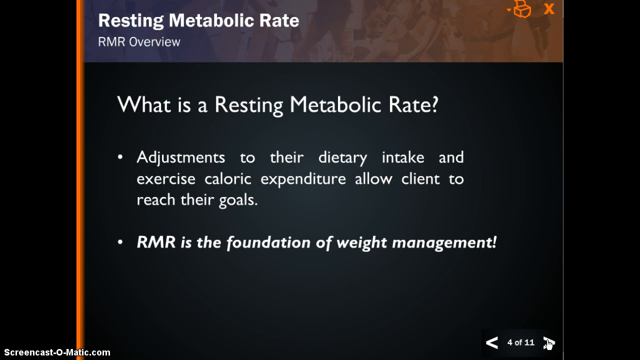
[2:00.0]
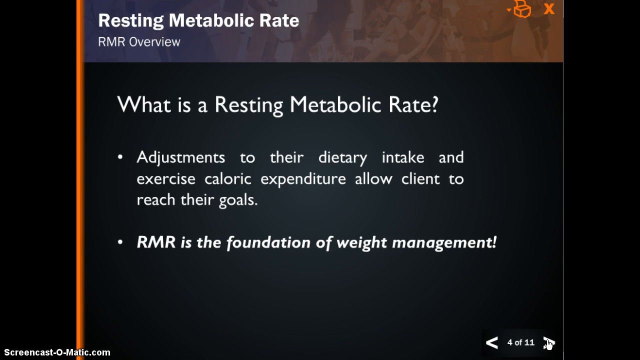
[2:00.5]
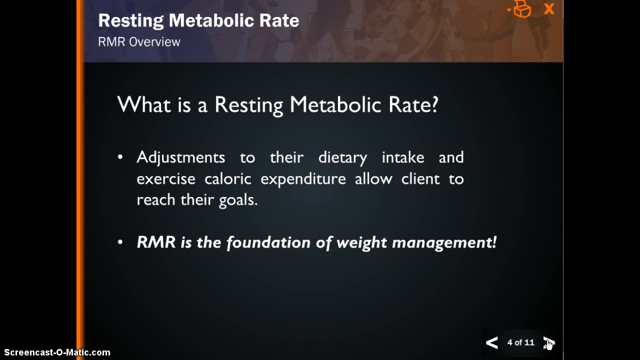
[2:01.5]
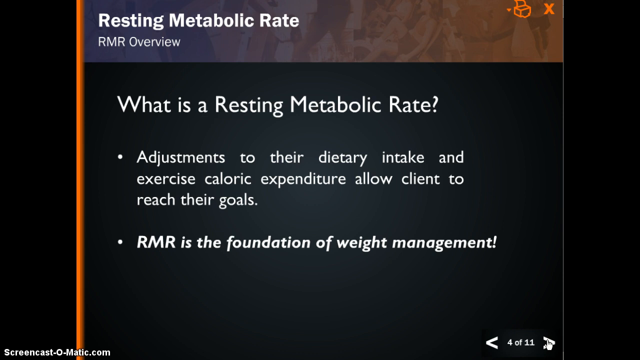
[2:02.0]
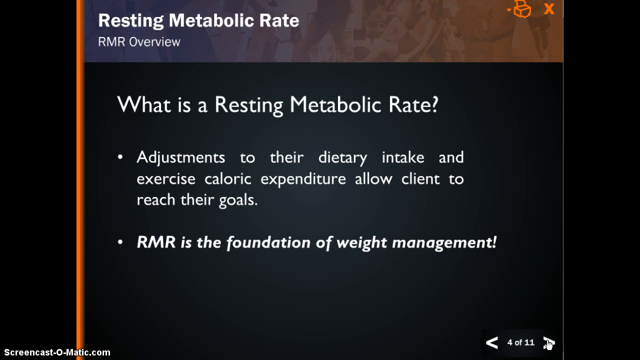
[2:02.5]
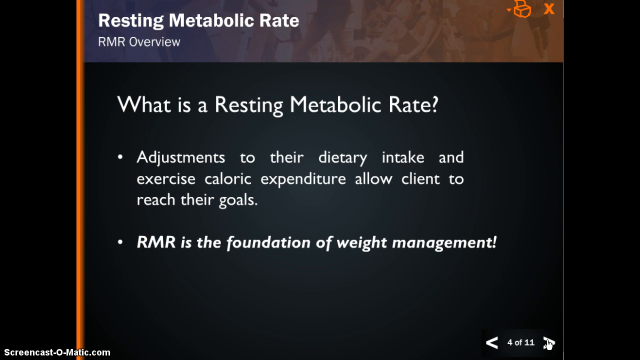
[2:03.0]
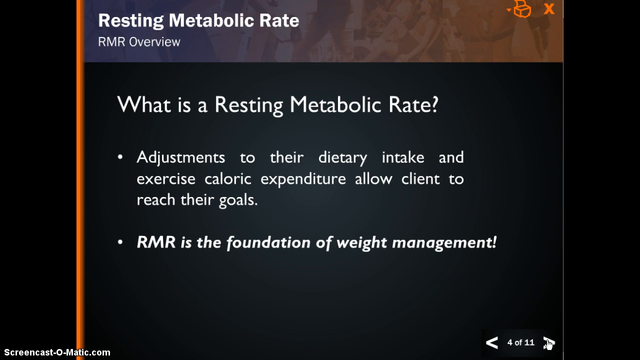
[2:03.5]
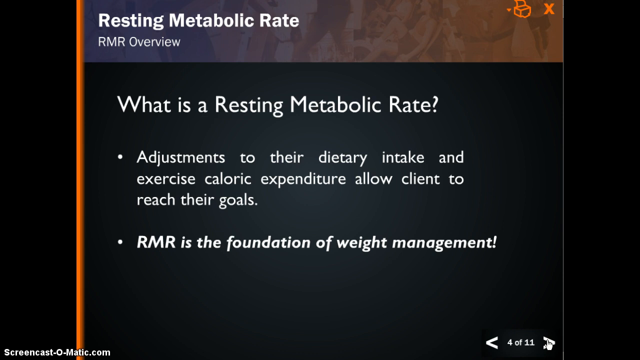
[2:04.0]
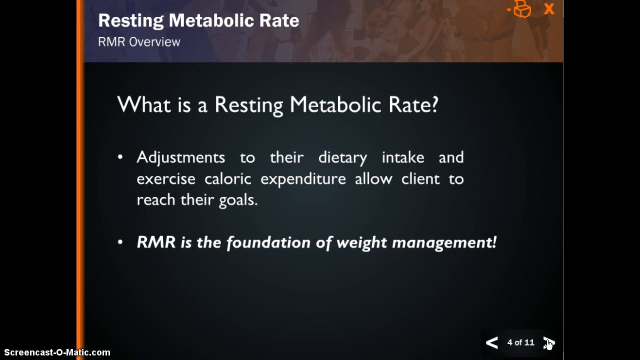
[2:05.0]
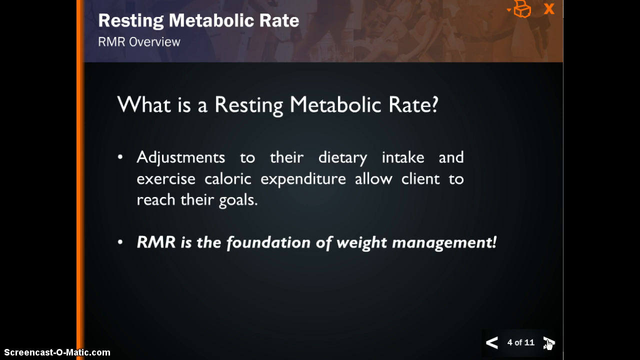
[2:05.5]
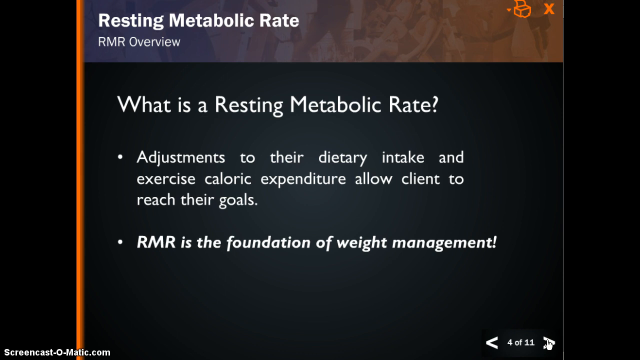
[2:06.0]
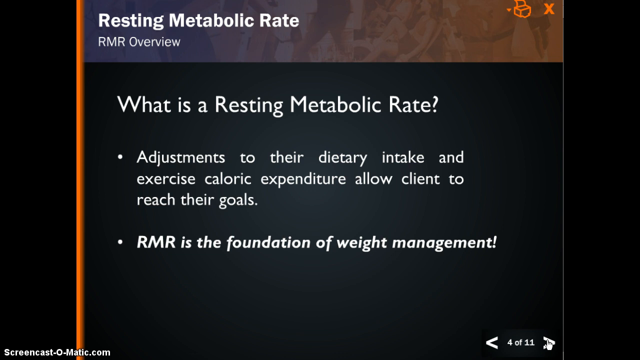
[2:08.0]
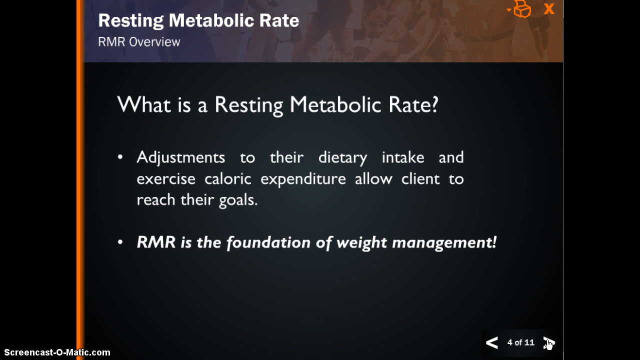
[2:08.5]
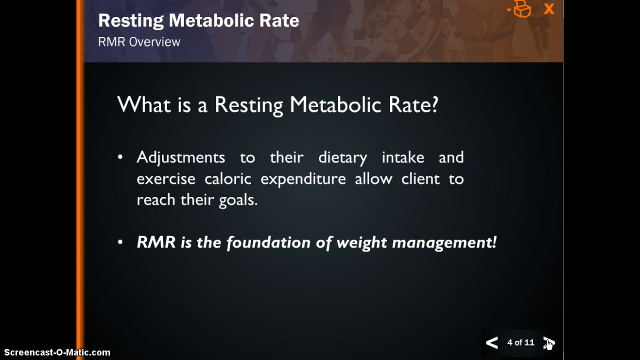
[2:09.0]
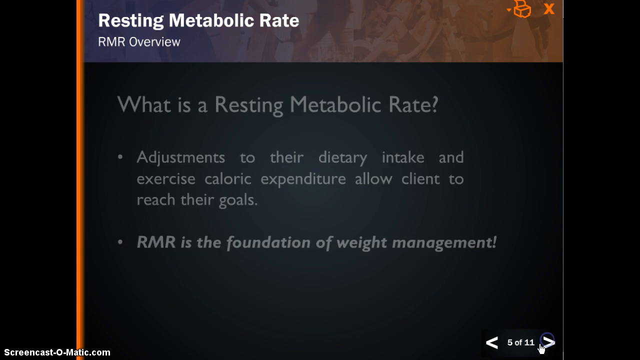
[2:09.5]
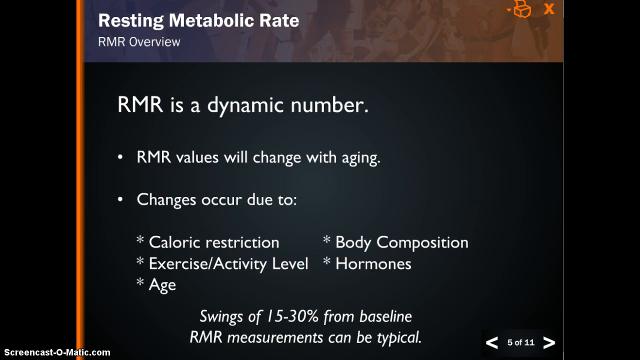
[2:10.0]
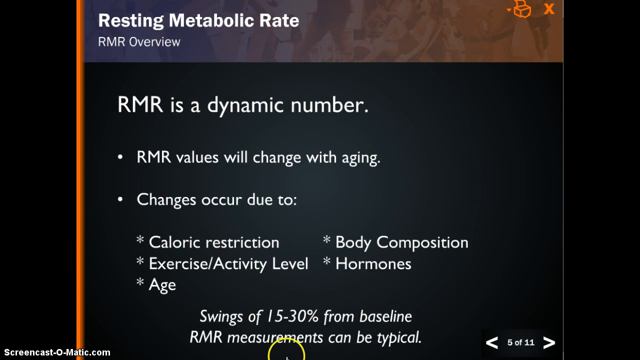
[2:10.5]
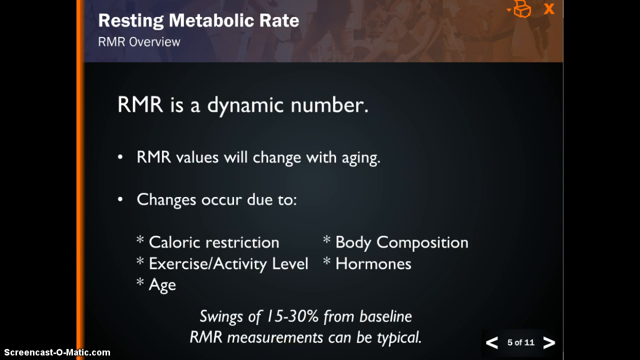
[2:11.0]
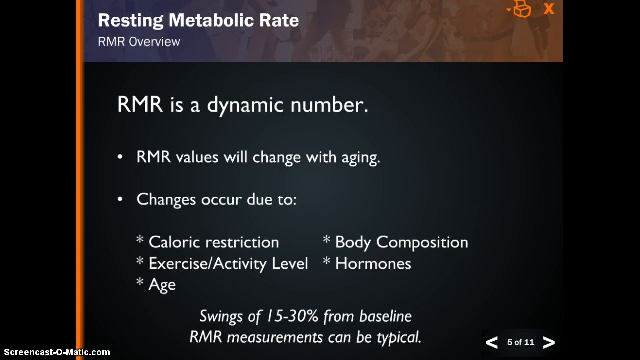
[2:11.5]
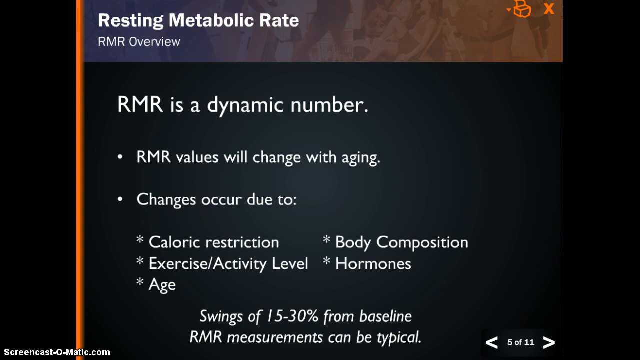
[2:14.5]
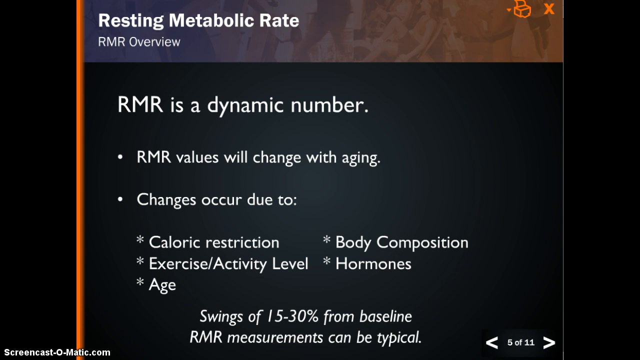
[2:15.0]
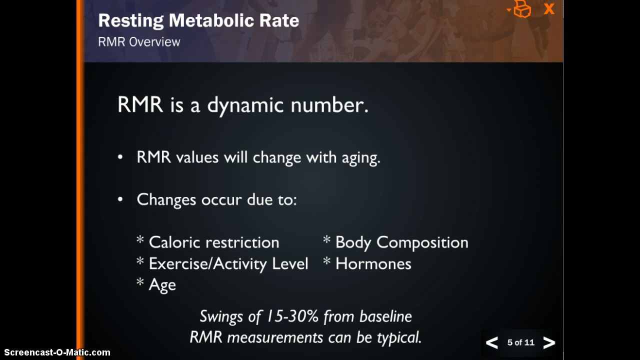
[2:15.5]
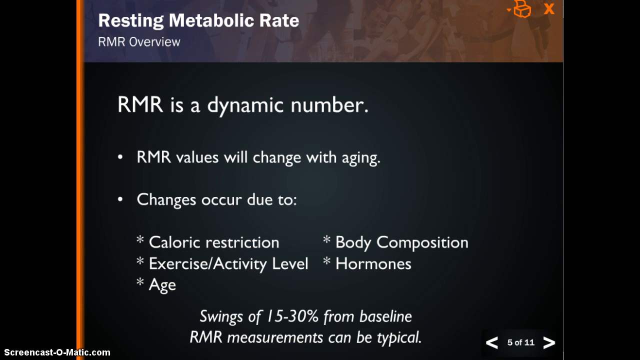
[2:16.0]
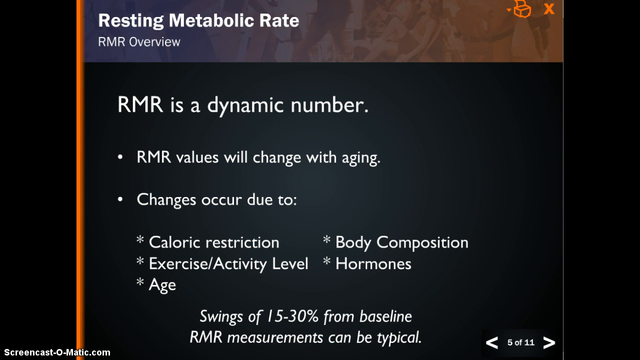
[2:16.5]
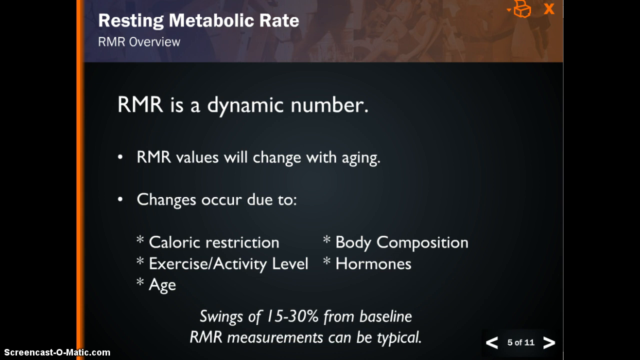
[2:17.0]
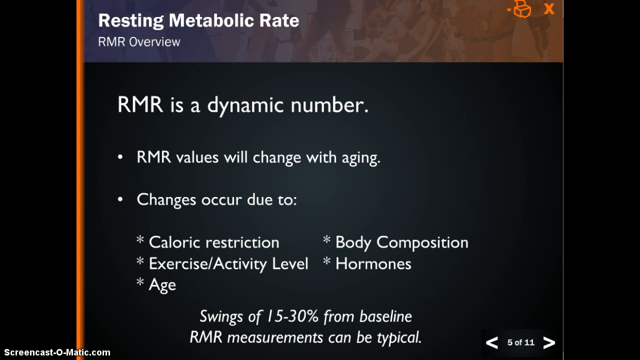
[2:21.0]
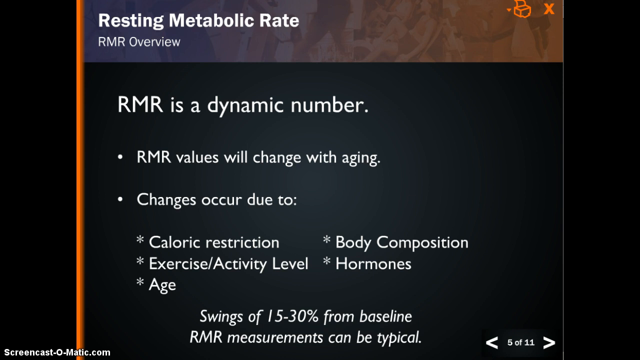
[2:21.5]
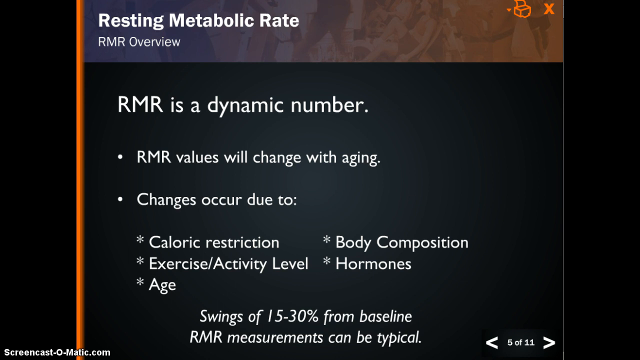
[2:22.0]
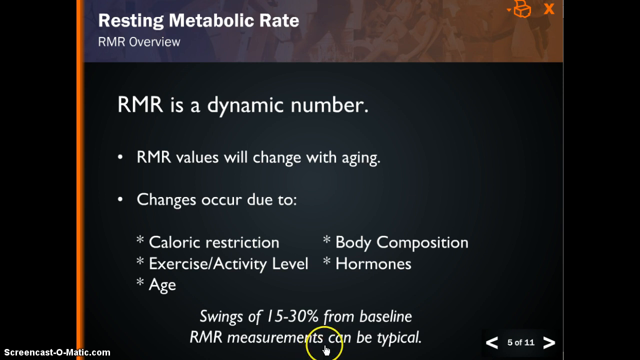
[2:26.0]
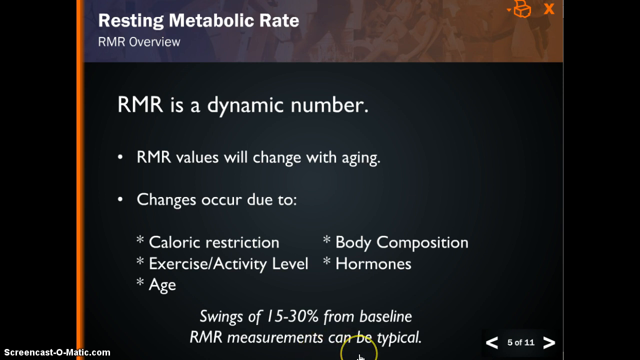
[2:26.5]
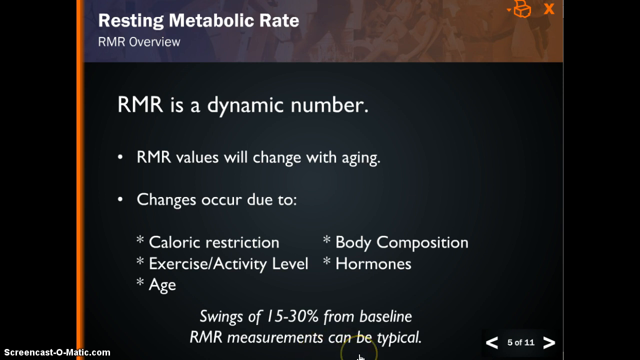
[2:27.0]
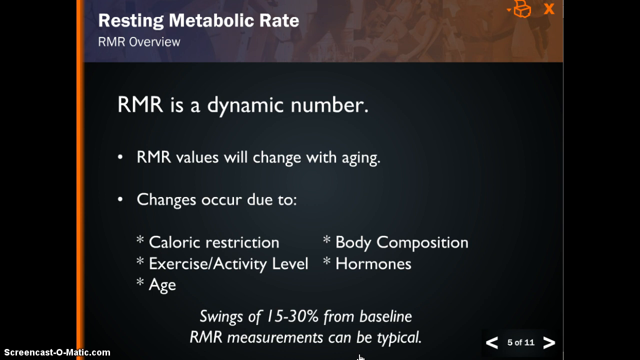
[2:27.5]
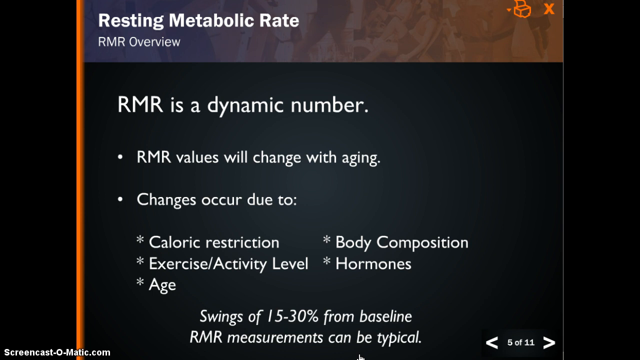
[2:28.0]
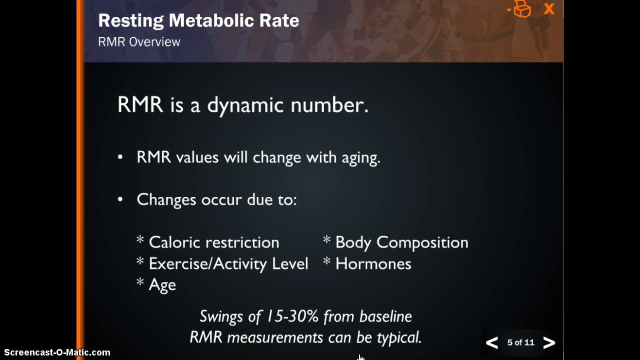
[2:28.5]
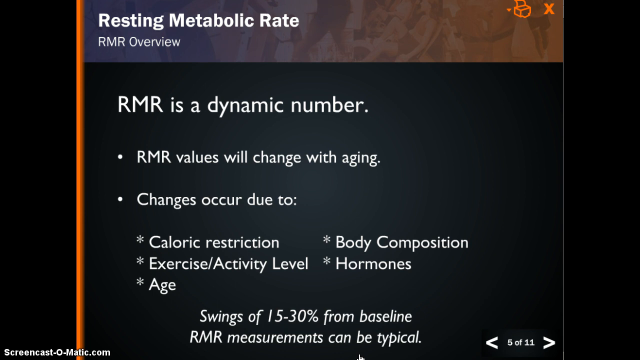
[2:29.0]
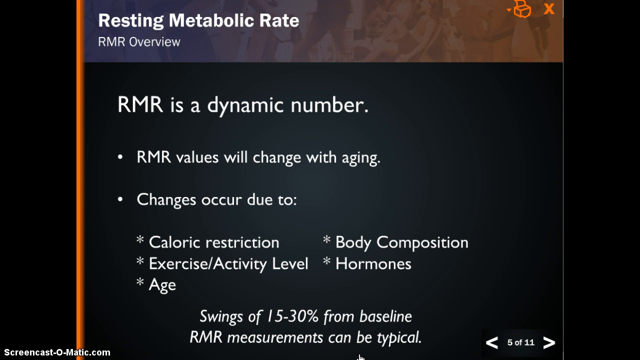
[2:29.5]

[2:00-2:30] After about 10 seconds the next slide appears. The title beneath the resting metabolic rate banner has changed to "RMR is a dynamic number". Below it are two bullet points followed by a list of five examples. The first bullet point reads "RMR values will change with aging" and the second reads "changes occur due to". The examples listed underneath are caloric restriction, exercise and energy levels, age, body composition, and hormones, marked with asterisks as bullet points, three on the left side of the slide and two on the right. The slide also says "swings of 15 to 30 percent from baseline RMR measurements can be typical". The page counter at the bottom of the screen now displays "5 of 11". All the text on the slide is white.